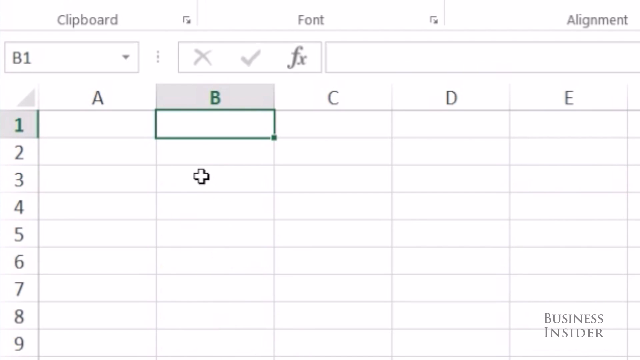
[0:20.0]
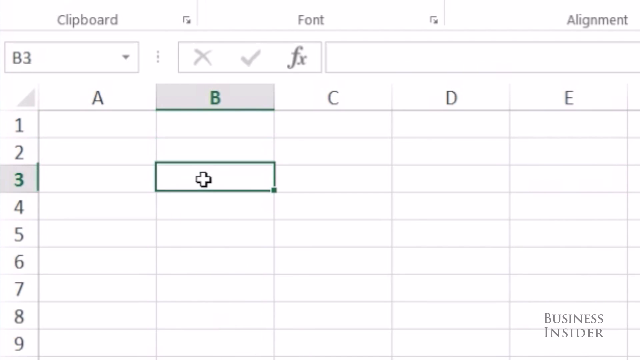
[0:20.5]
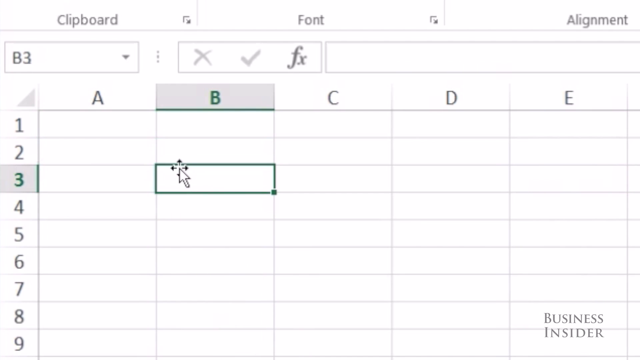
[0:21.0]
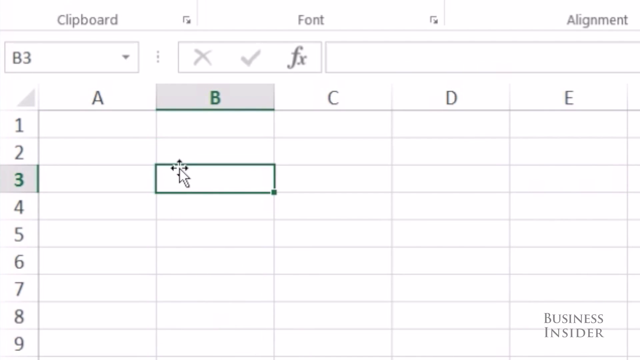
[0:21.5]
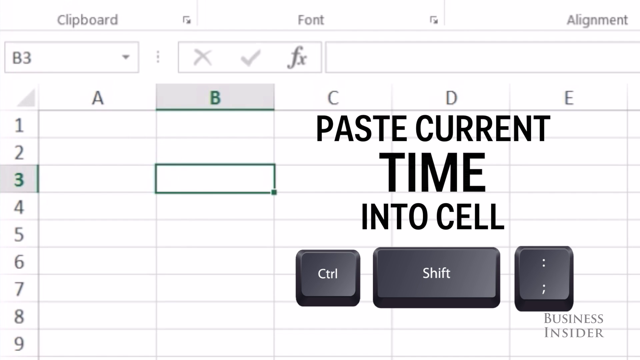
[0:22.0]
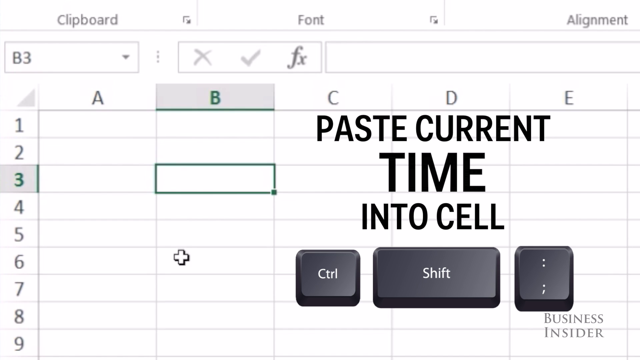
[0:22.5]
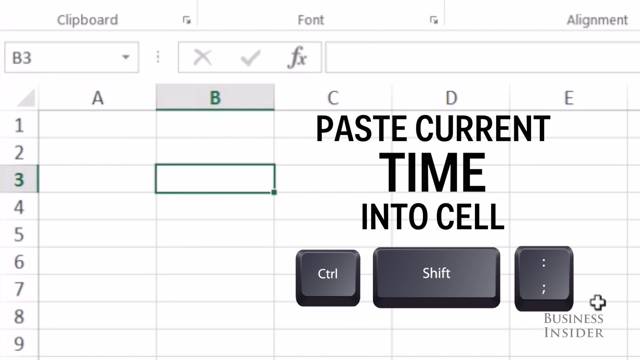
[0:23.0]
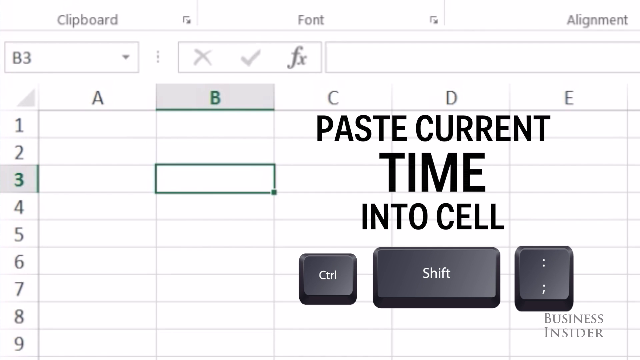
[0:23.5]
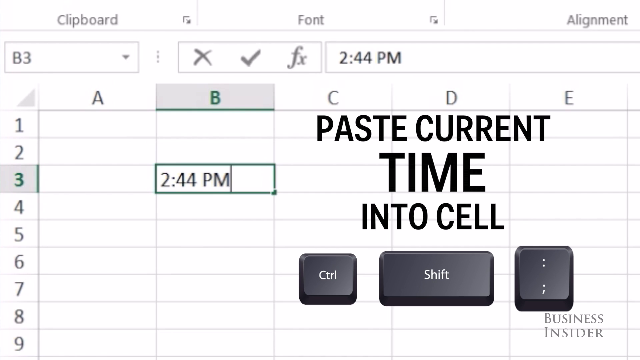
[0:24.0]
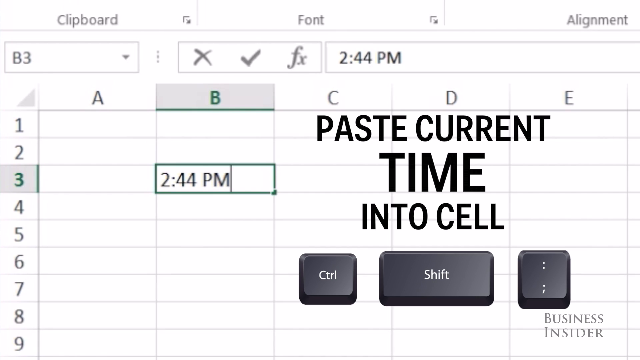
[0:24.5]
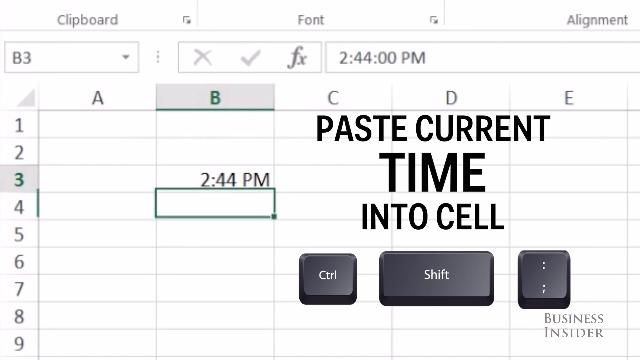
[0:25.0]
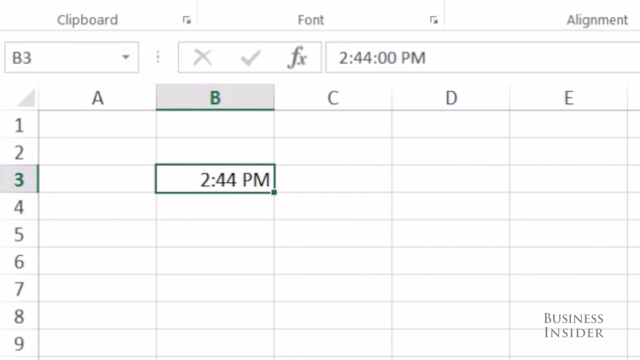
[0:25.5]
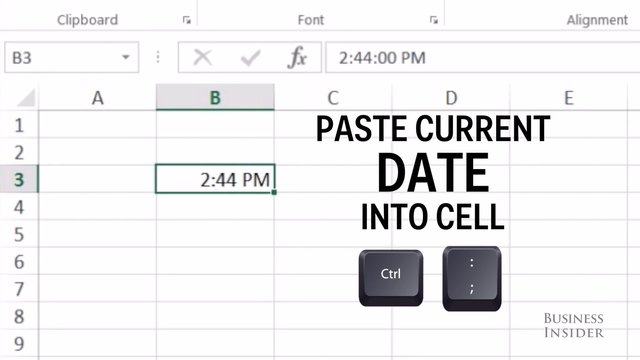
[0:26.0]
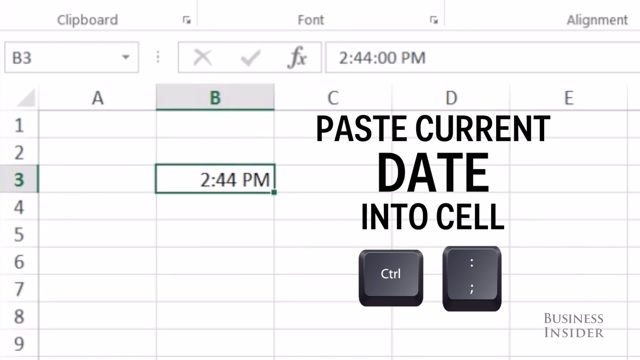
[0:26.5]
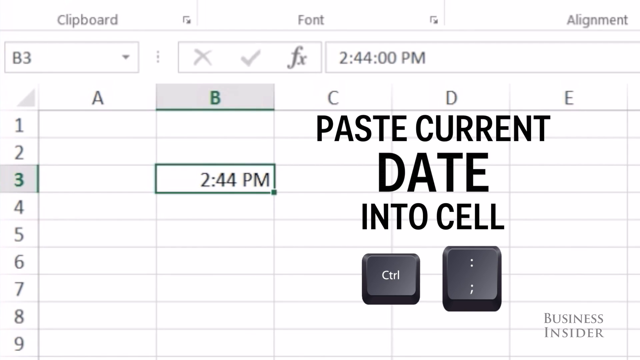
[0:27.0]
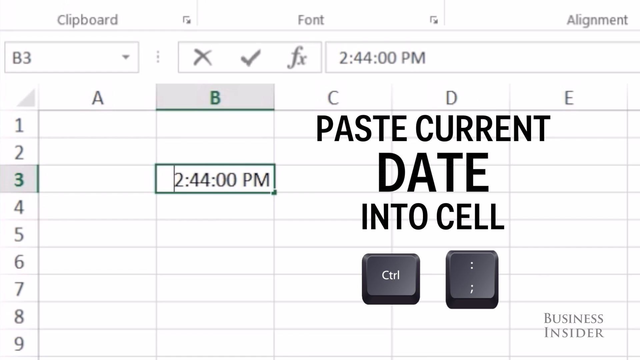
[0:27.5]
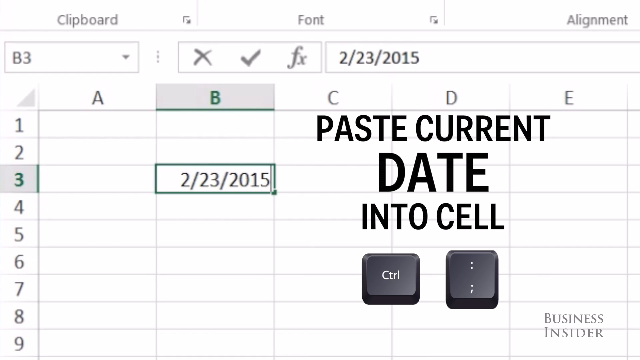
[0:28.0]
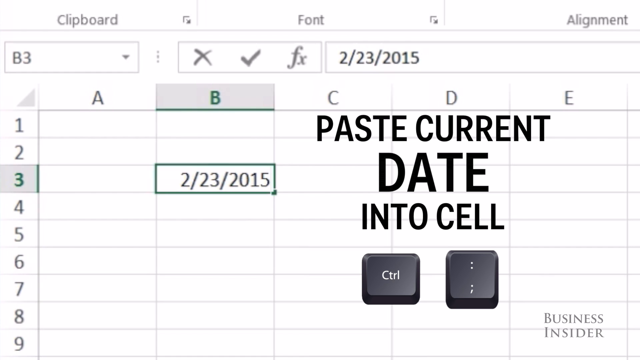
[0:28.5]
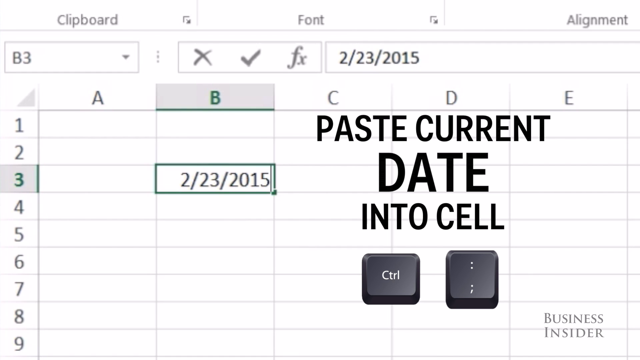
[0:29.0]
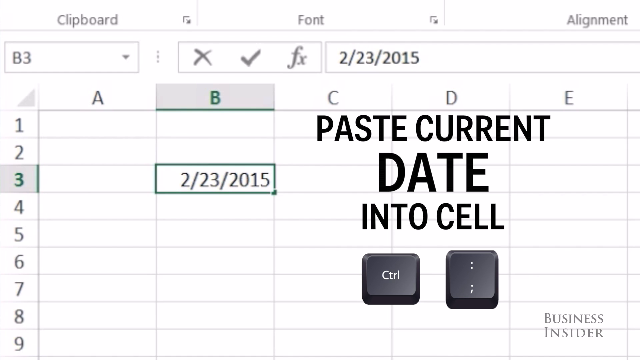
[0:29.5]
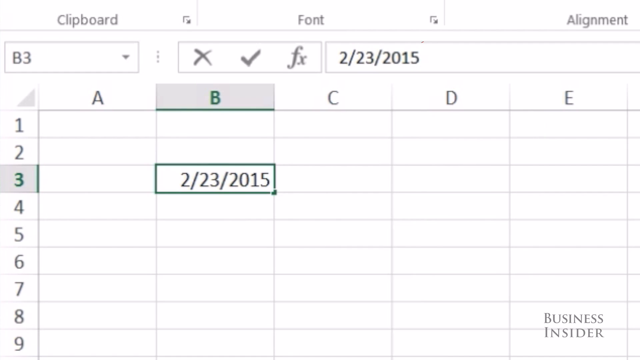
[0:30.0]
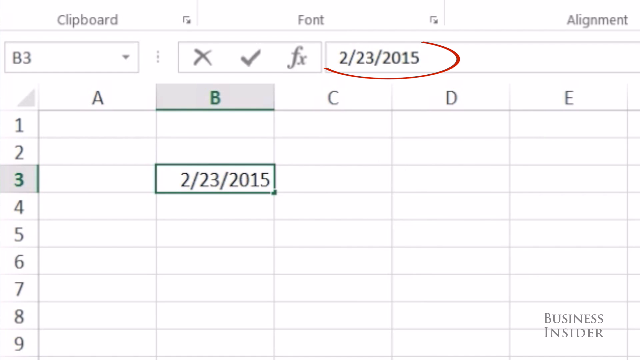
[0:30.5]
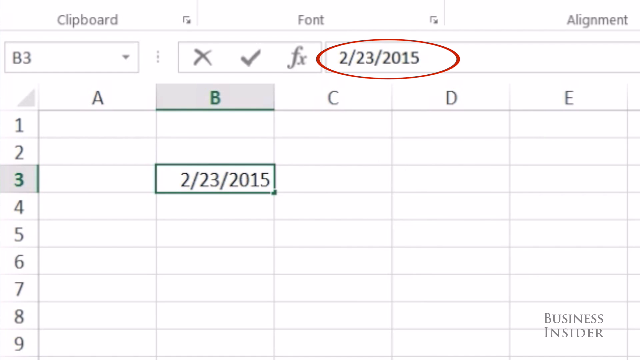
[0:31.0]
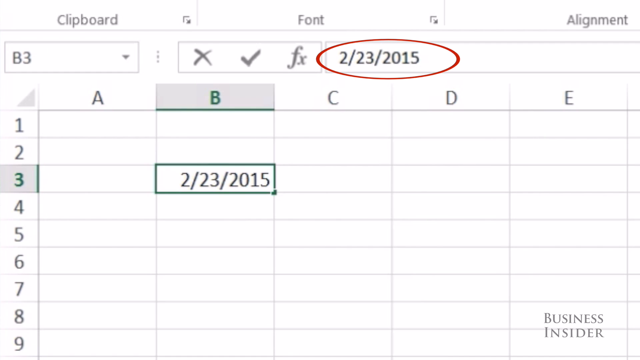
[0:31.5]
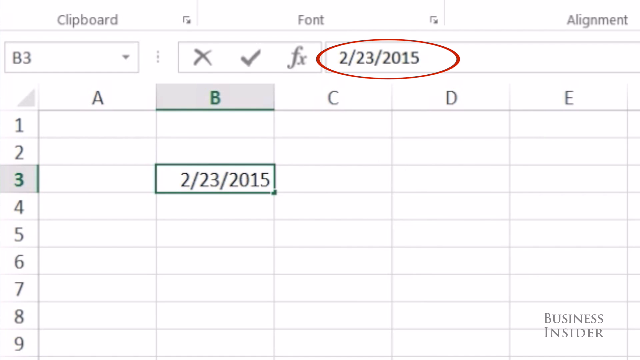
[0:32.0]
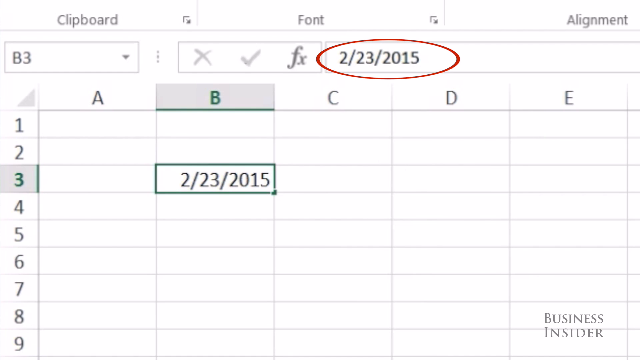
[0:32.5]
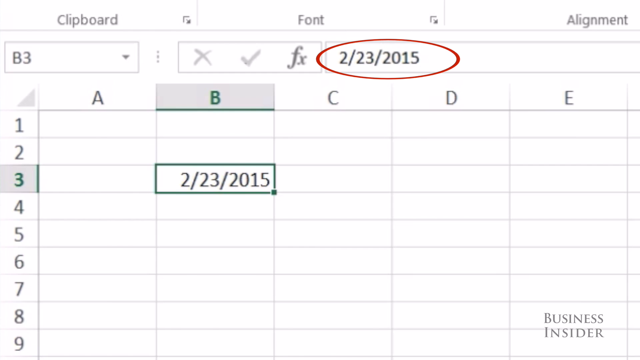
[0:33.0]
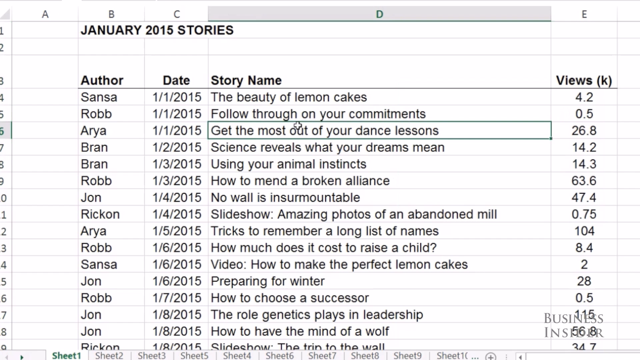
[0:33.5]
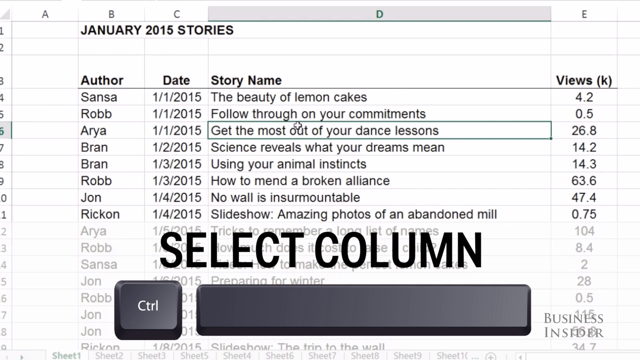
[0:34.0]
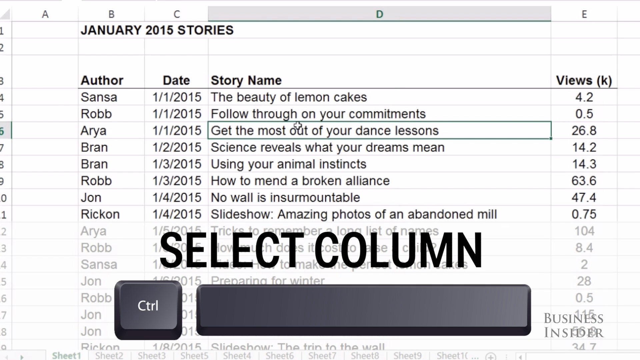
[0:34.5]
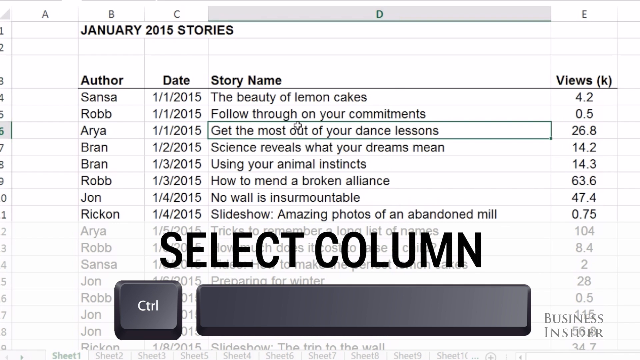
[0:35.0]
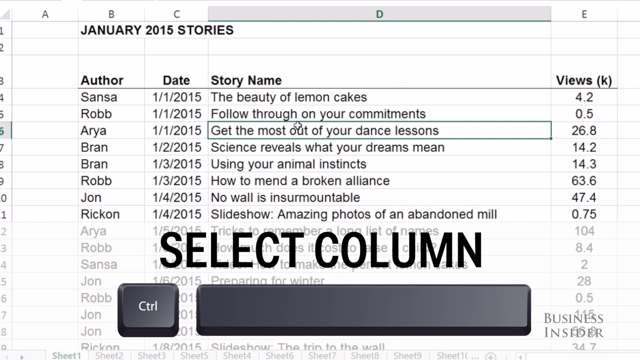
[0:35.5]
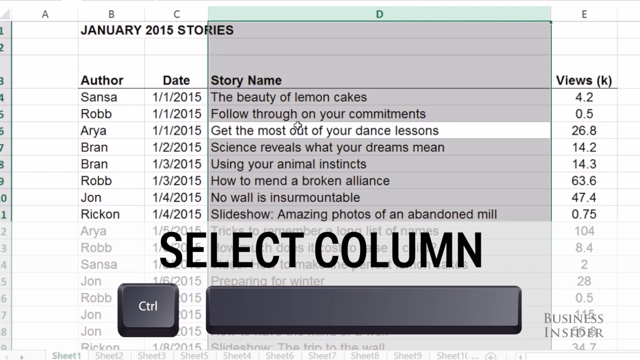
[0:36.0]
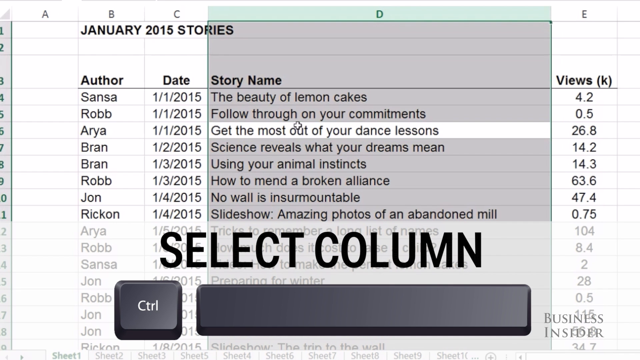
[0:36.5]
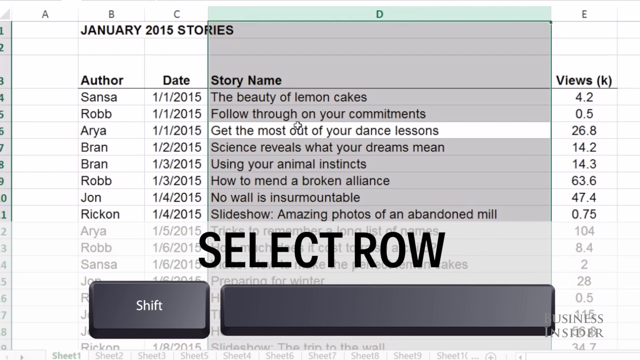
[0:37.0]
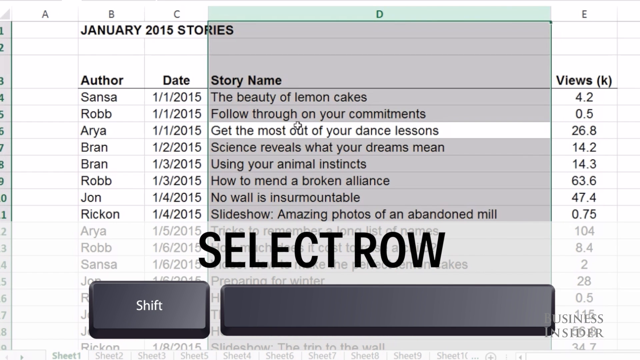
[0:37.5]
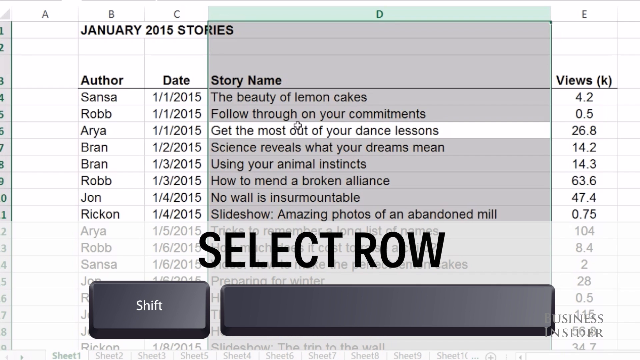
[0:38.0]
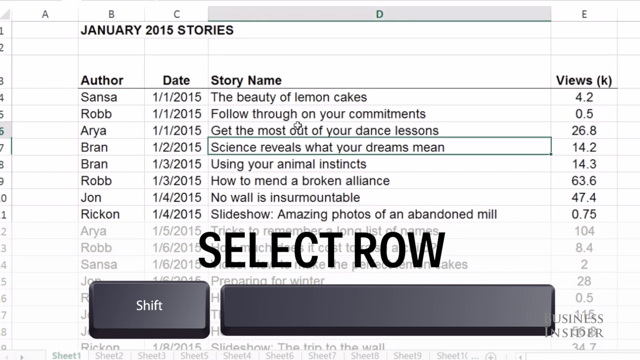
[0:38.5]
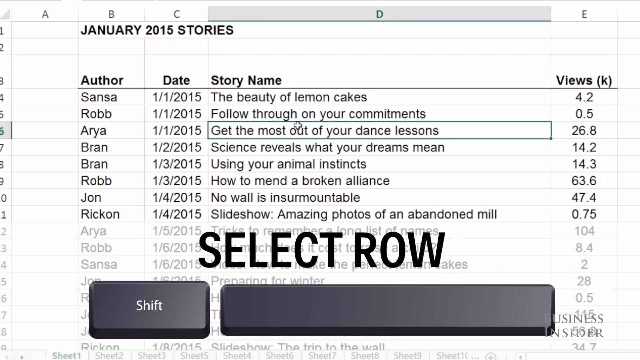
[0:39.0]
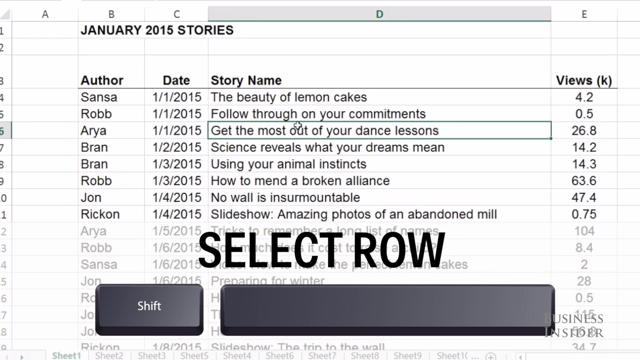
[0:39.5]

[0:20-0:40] An Excel spreadsheet appears to be on the screen. A pointer shaped like a white T moves through the different boxes, which are empty. The text "Paste current time into cell" pops up, and below it computer keys appear, one saying Control and the other Shift, plus an additional key with some options on it. A time then seems to be put into one of the cell blocks. Next, "Paste current date into cell" appears, with the Control key shown alongside another key. Up top there is a date in a box, and a red oval appears to be drawn around it. A different list is then shown with "Select row" written along with more computer keys, and someone seems to be clicking through the options on the spreadsheet.